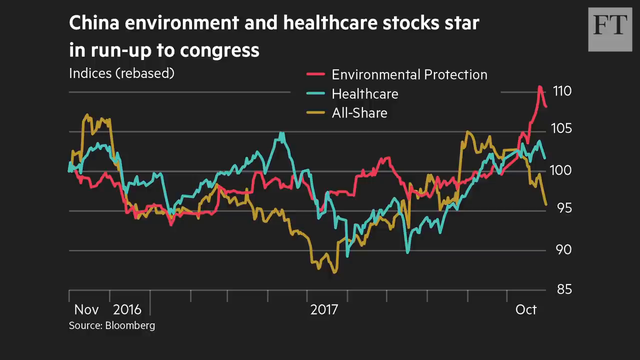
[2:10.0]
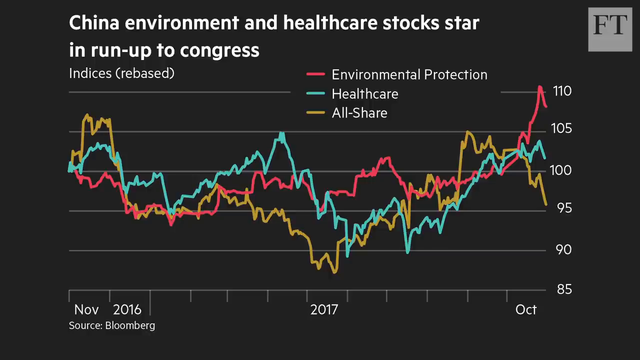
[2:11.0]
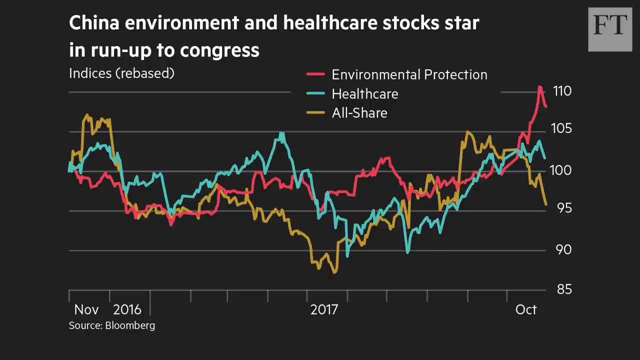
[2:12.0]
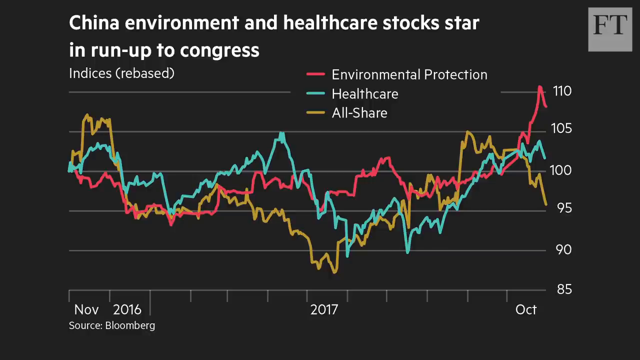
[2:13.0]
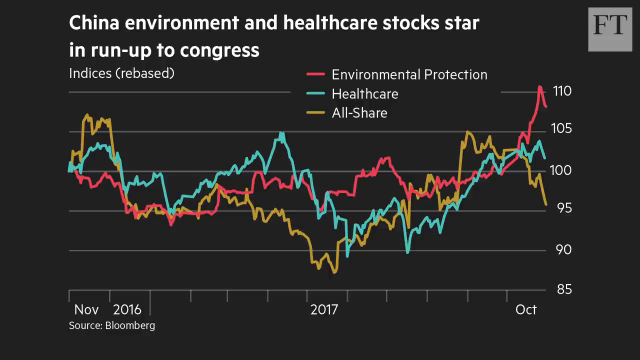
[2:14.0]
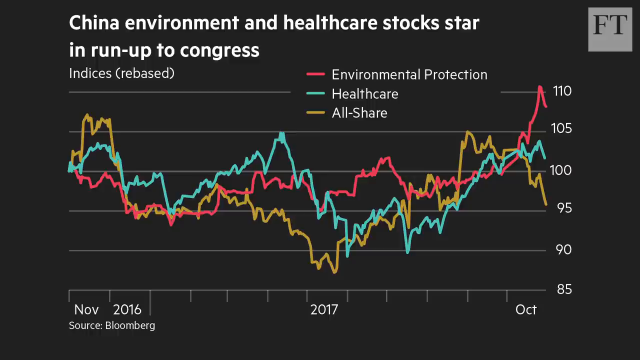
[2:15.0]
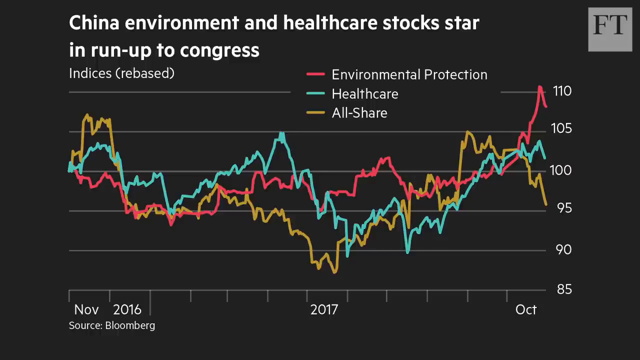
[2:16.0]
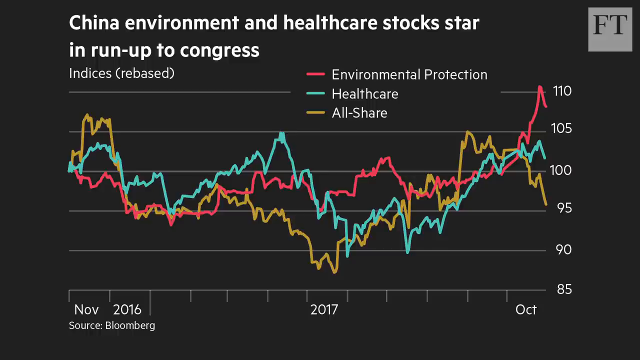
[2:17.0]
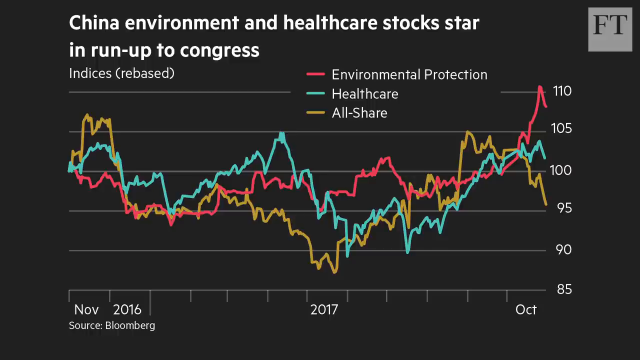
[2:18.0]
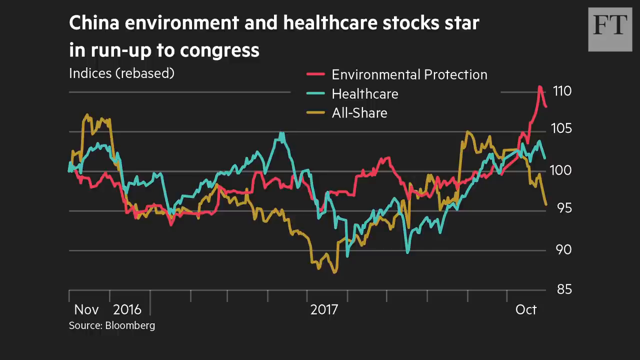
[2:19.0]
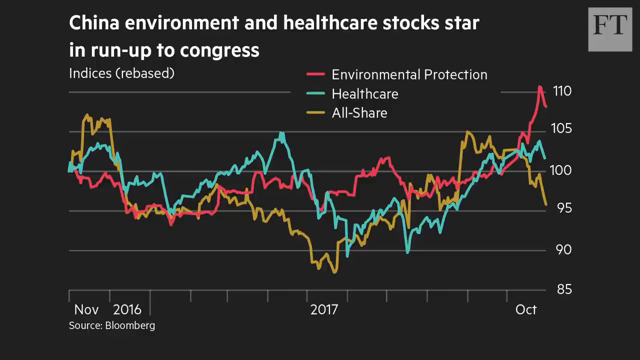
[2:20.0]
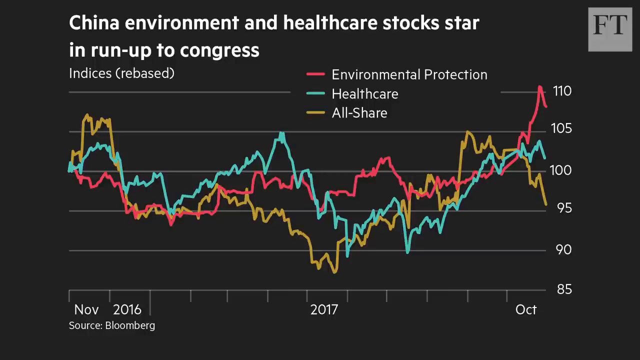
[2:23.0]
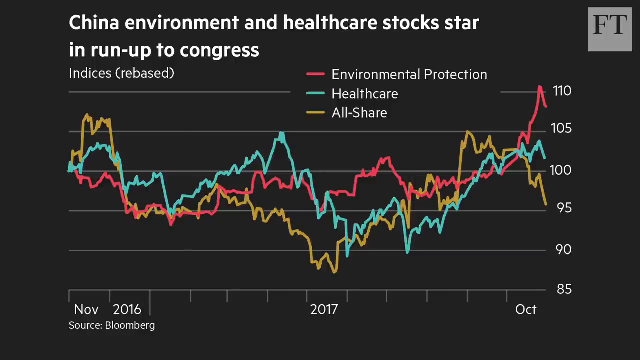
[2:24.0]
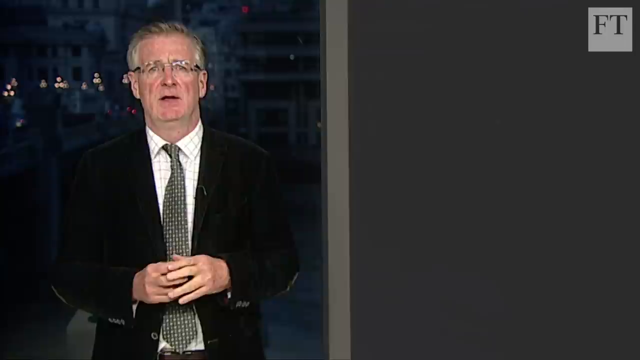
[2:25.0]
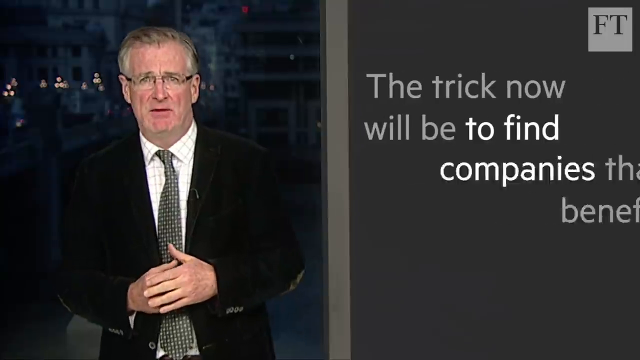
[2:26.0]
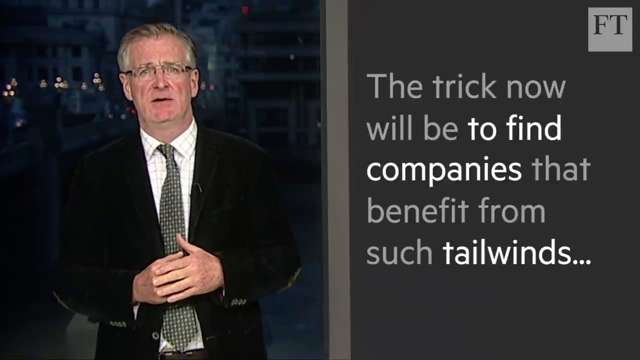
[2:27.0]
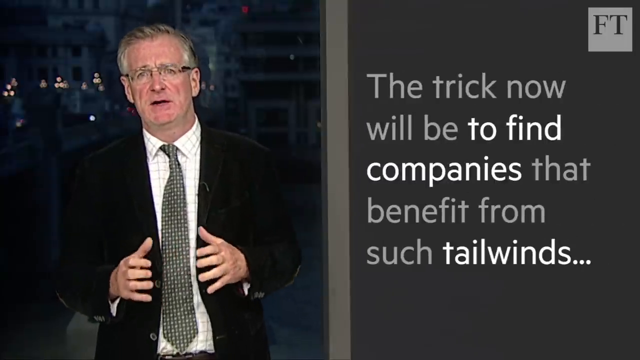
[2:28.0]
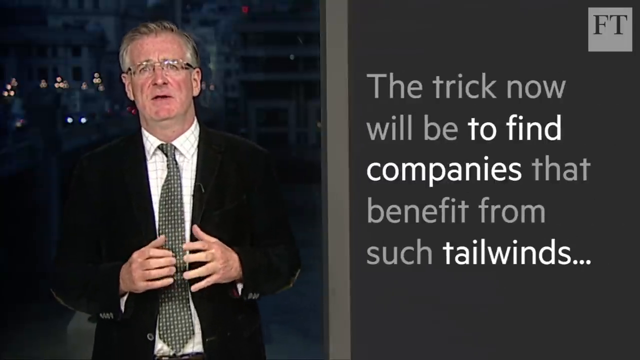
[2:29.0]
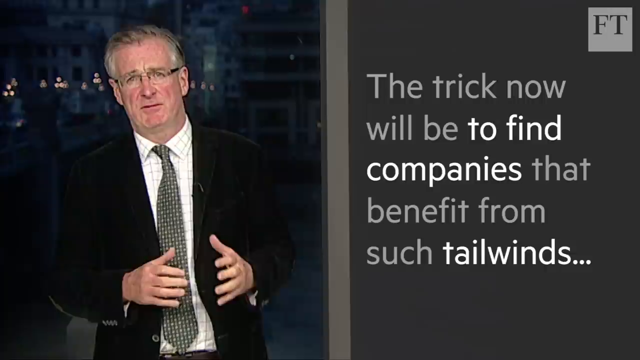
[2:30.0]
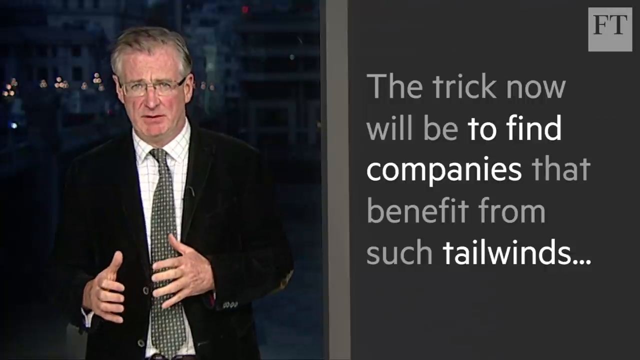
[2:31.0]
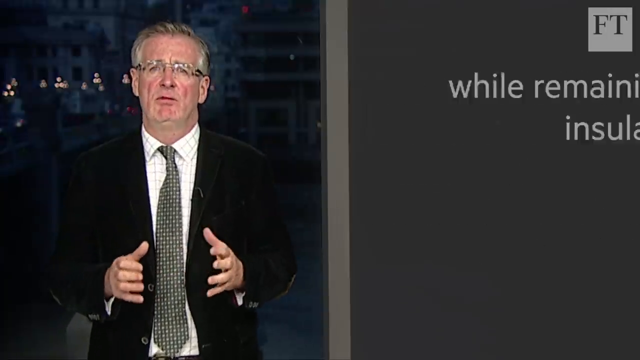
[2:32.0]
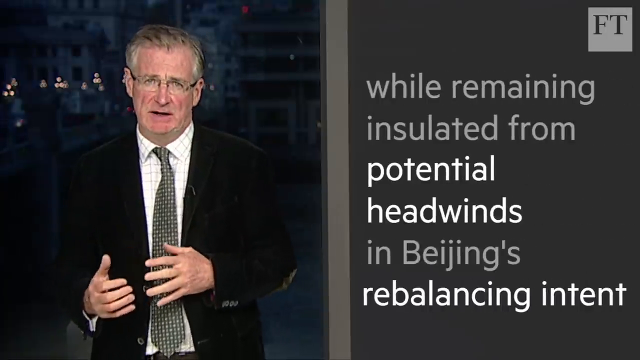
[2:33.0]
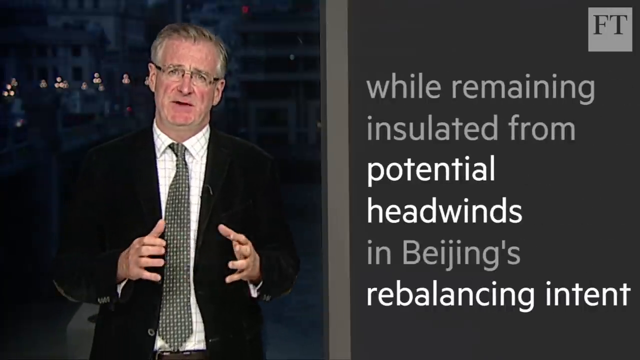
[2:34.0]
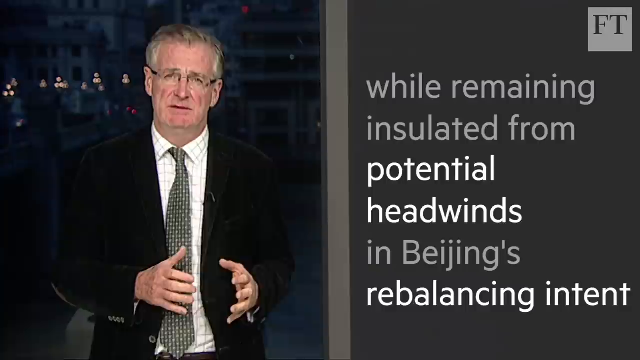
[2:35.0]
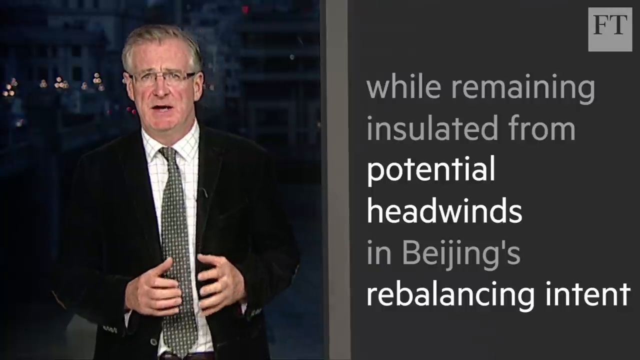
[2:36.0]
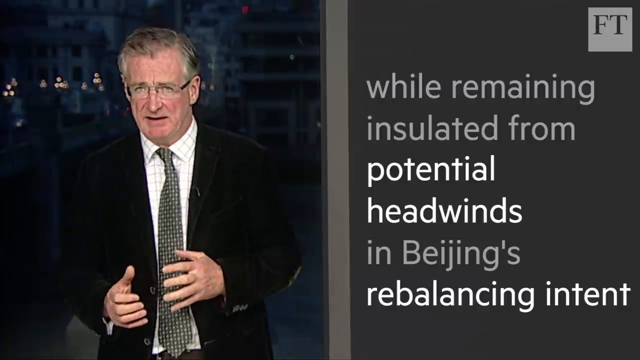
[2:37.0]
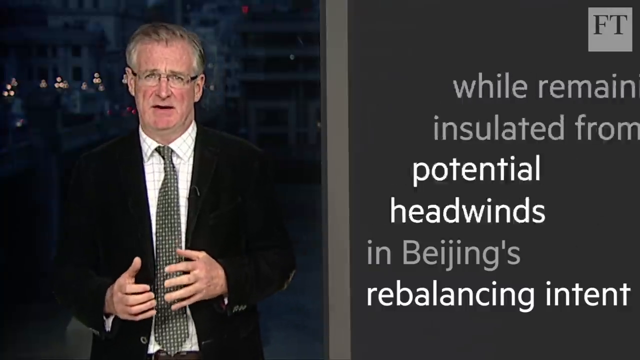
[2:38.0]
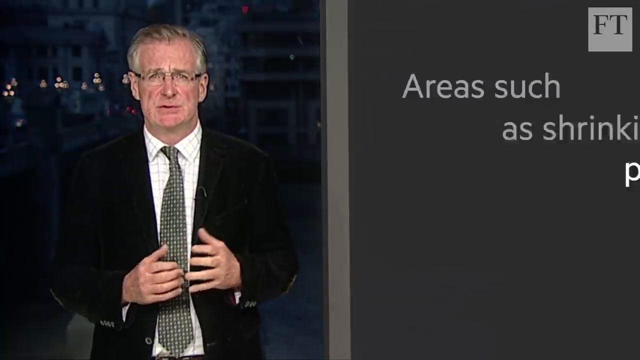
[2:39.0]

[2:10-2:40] For several seconds a graph is on the screen against a black background. In white at the top it says "China Environment and Healthcare Stocks star and run up to Congress," and below that on the left, "Indices Rebased." In the center right are a red line for "Environmental Protection," a blue line for "Healthcare" and a yellow line for "All Share." There are six horizontal bars, labeled on the right, top to bottom, 110, 105, 100, 95, 90 and 85. Across the bottom it says "November 2016" on the left and "2017" in the center, and below that "Source Bloomberg." Three sets of squiggly lines run horizontally across the graph, corresponding to the labels. The scene then switches back to the newscaster standing on the left-hand side of the screen, speaking to the camera. On the right, the text box against gray reads "The trick now will be to find companies that benefit from such tailwinds." The man continues to speak and emphasizes words with his hand. The text box changes to "While remaining insulated from potential headwinds, in Beijing's rebalancing intent." The next text box reads "areas such as shrinking a property bubble, reducing financial leverage..."